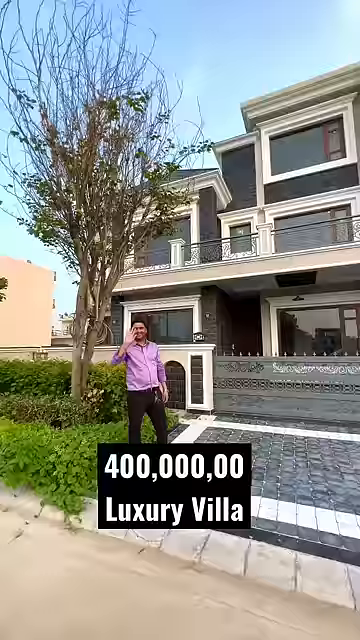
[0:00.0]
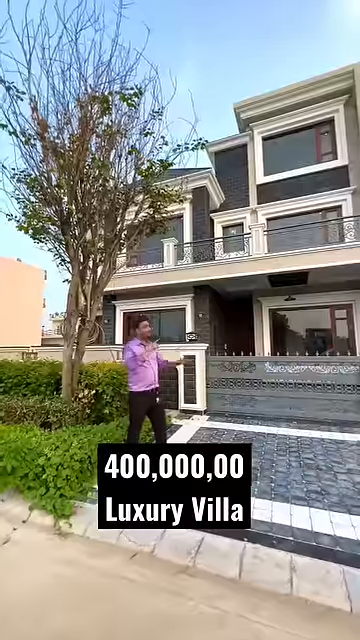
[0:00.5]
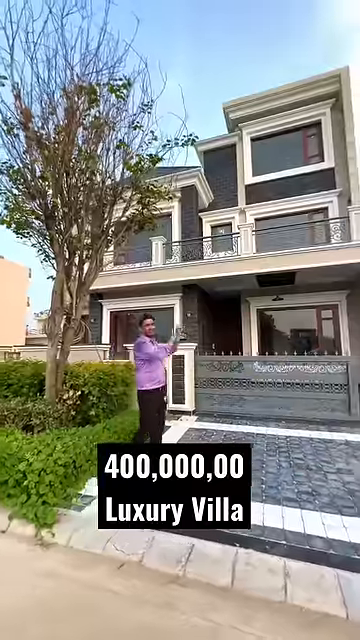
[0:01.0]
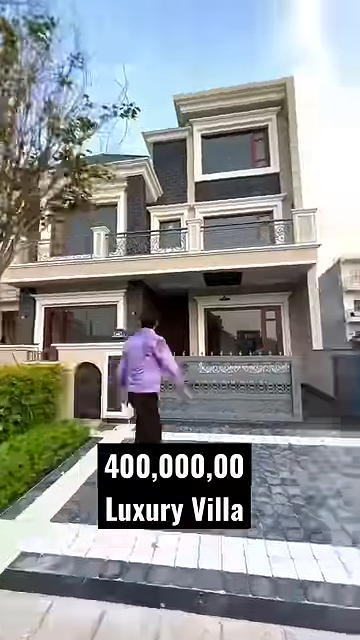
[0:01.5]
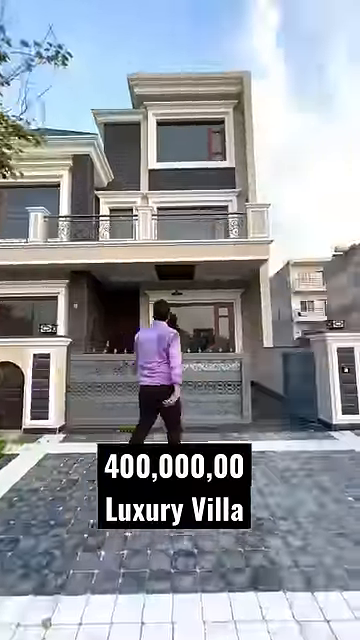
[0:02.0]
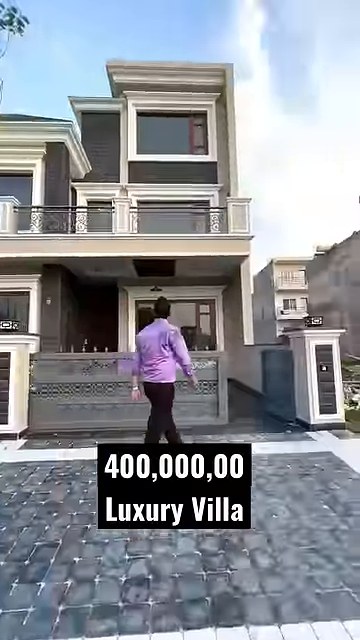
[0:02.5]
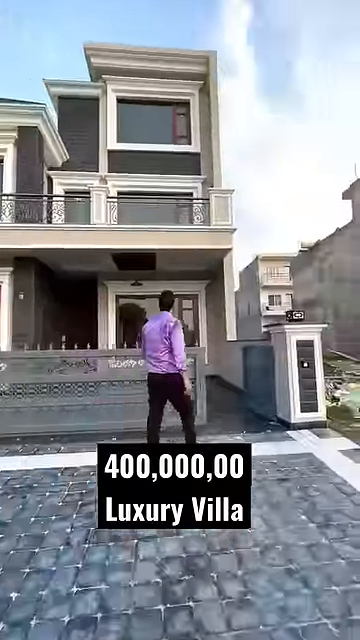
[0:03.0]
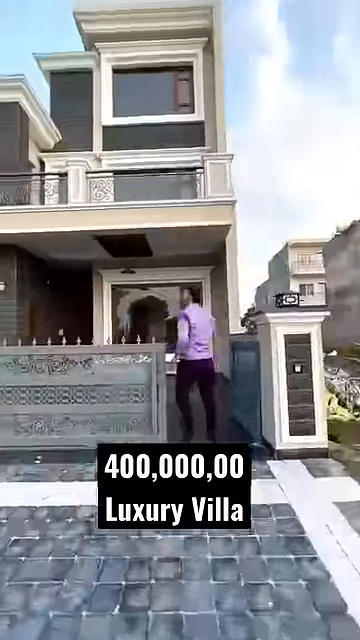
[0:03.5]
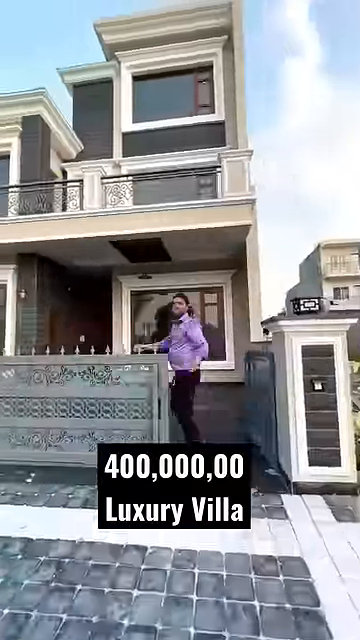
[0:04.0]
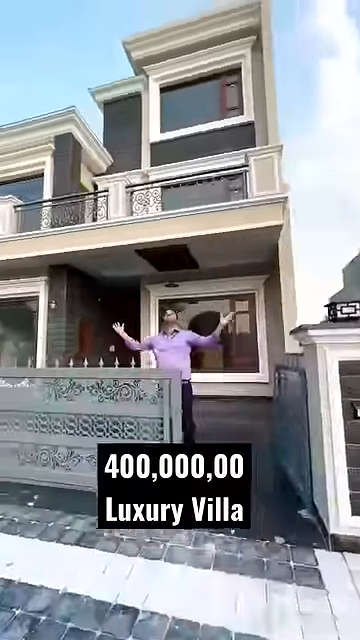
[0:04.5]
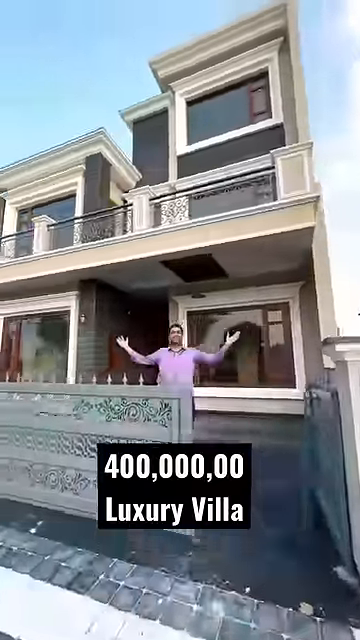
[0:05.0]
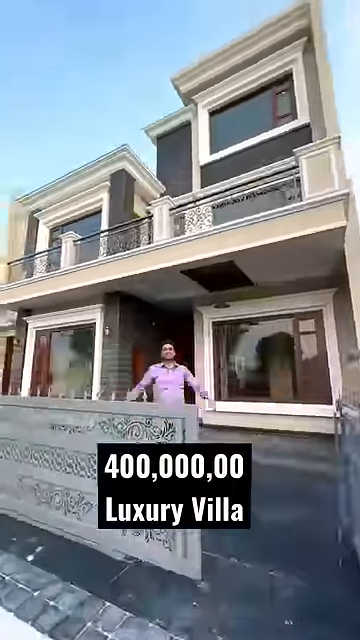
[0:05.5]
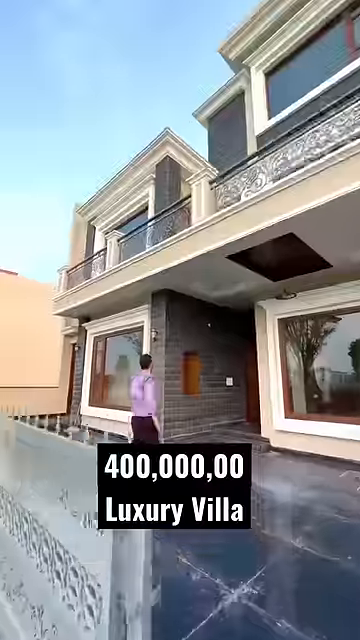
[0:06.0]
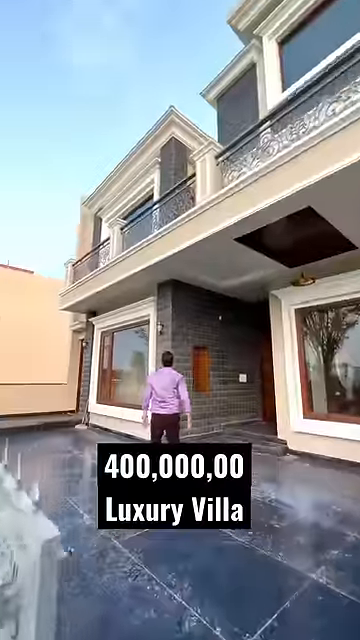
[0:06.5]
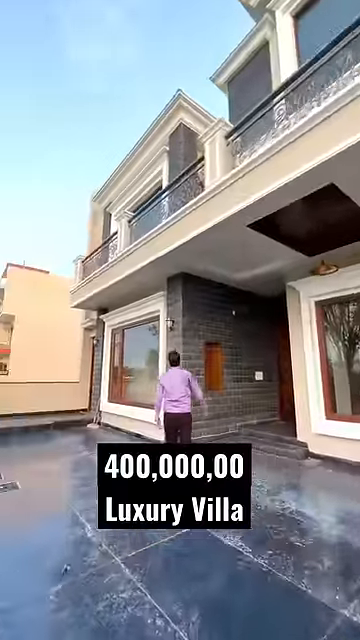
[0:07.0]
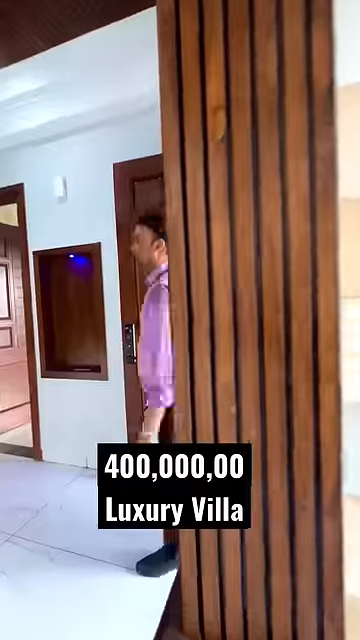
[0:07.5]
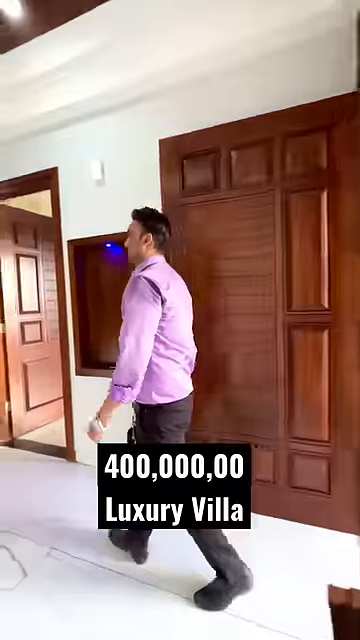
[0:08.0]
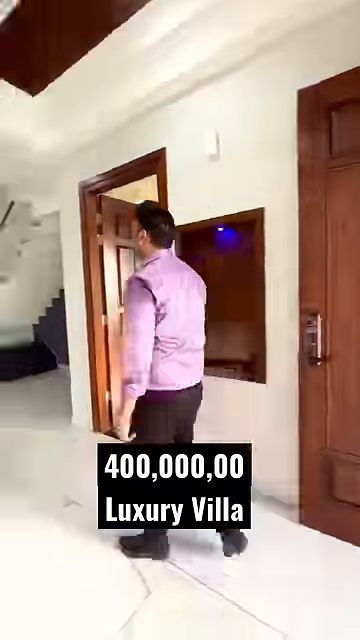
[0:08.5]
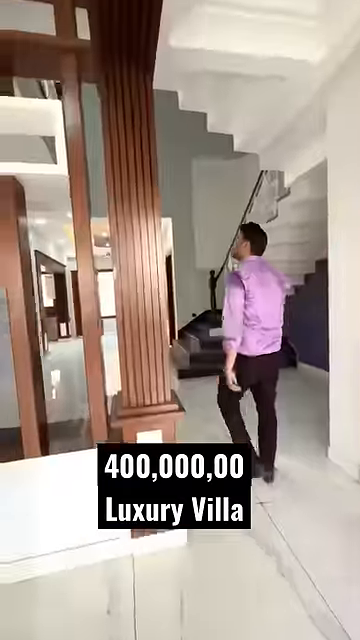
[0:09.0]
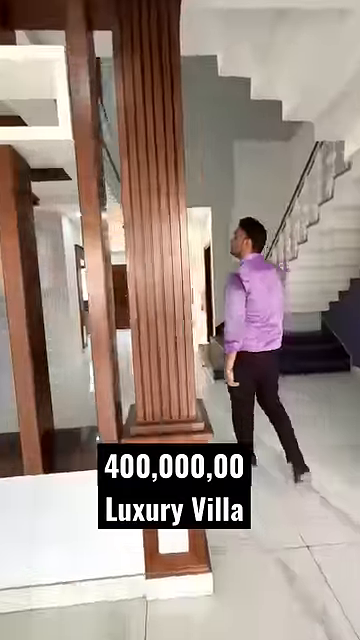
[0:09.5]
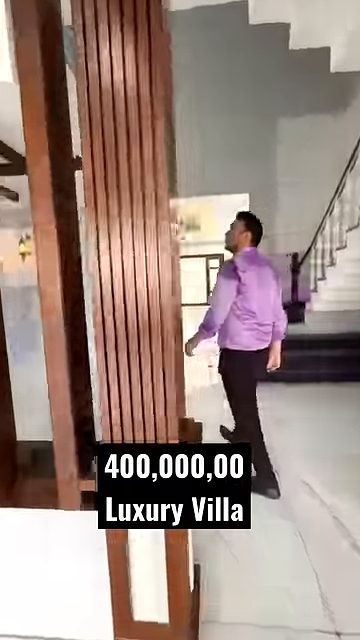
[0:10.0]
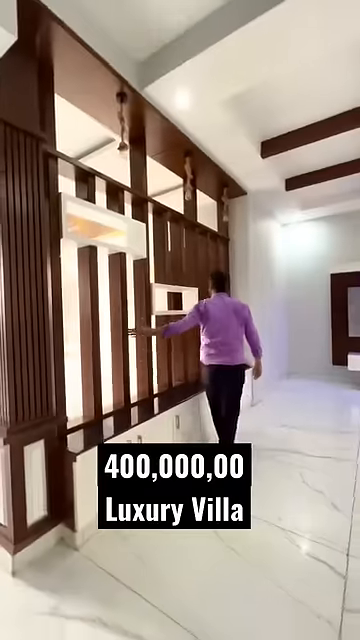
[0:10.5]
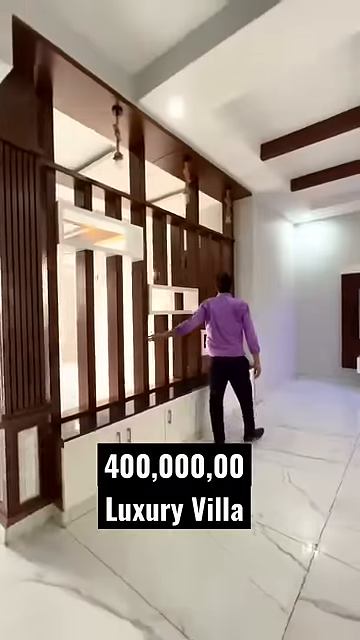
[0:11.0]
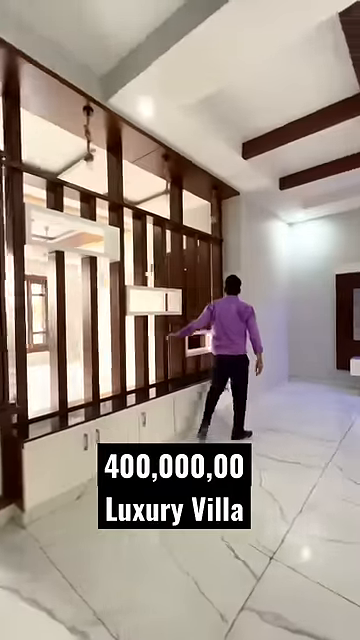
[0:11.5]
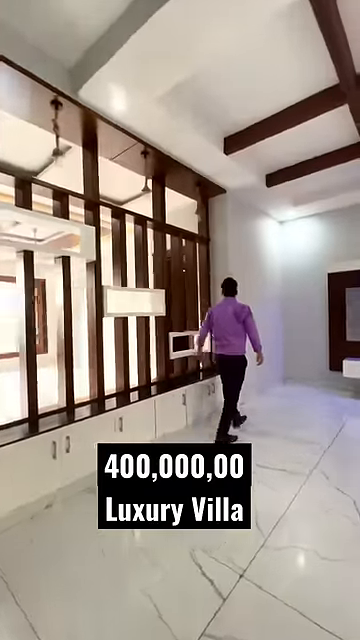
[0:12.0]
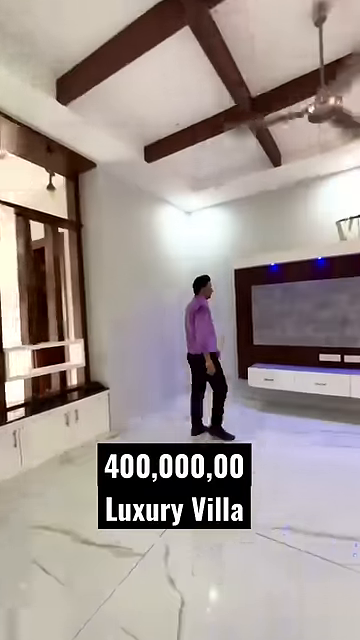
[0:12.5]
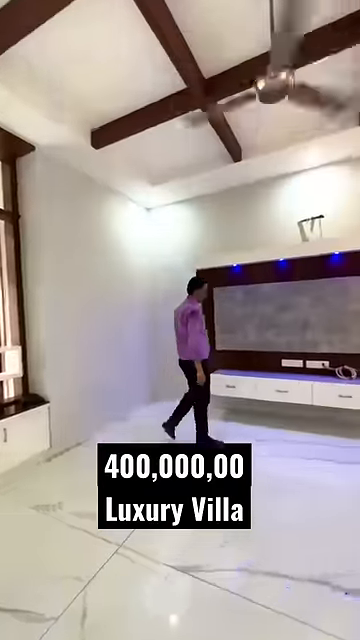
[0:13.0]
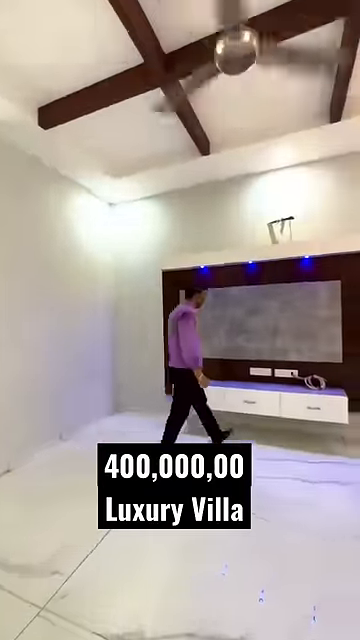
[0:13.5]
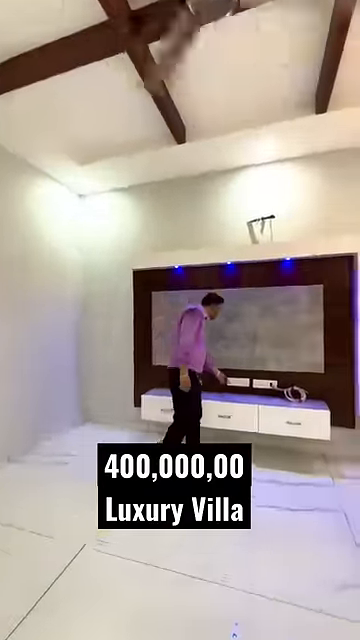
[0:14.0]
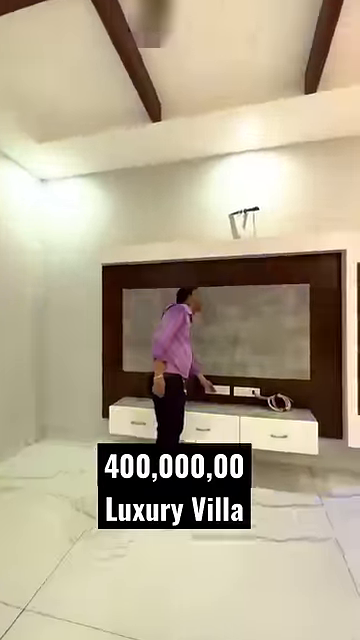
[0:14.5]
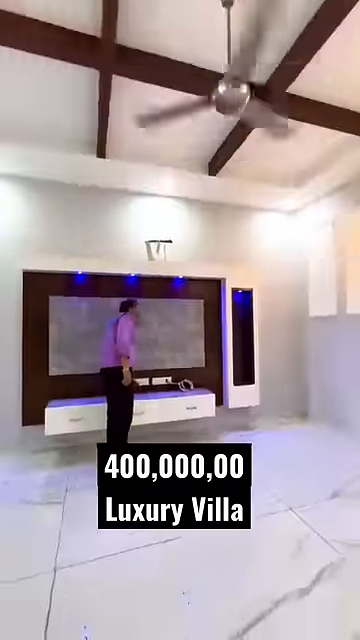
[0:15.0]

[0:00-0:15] Shot in portrait mode as a YouTube short, the video opens outdoors on a somewhat interesting box-shaped building with a nearly leafless tree in the front yard. What looks like a dark blue tile driveway leads up to some kind of greenish-gray fence gate further up the driveway, and the house is full of long rectangular windows. A man in a purple shirt and black pants is standing on the driveway out front, pretty far away. Black text in a block reads "400,000,00 Luxury Villa." The man walks past the gate and up the driveway and sort of throws his hands up, showing the house. The shot then moves inside the house, which is very elegant, with a lot of wood and white stone or marble, staircases, and wood features. The floor looks like white marble. The interior is very monochrome, just the deep brown of the wood and the white of the marble.